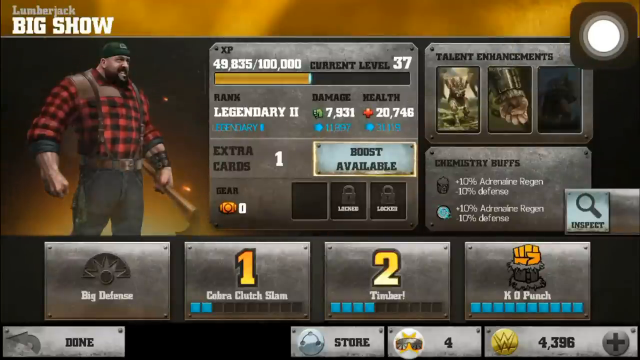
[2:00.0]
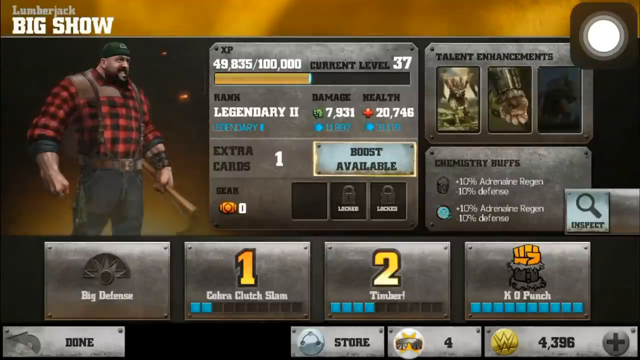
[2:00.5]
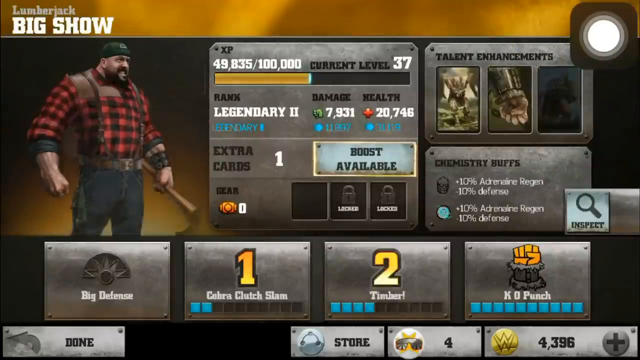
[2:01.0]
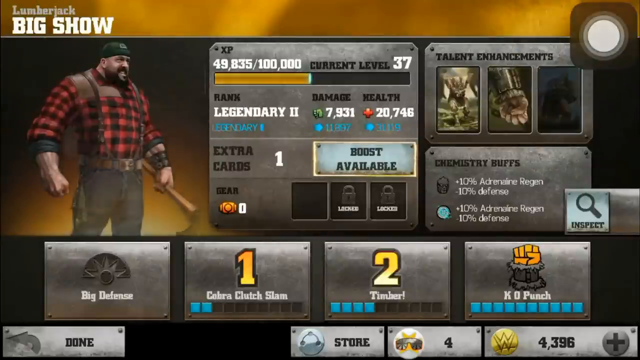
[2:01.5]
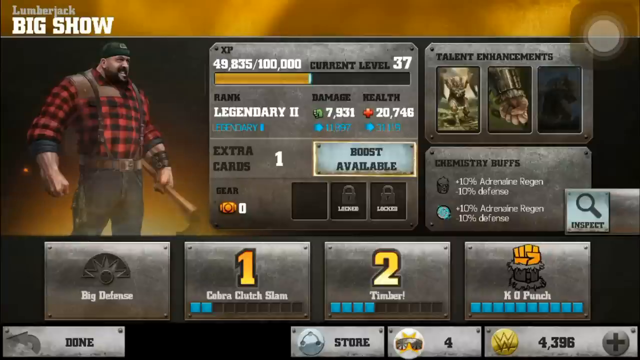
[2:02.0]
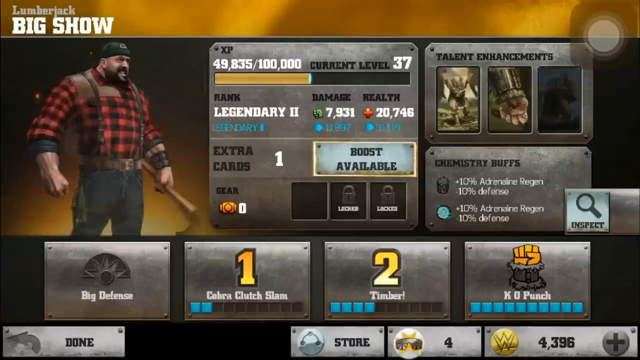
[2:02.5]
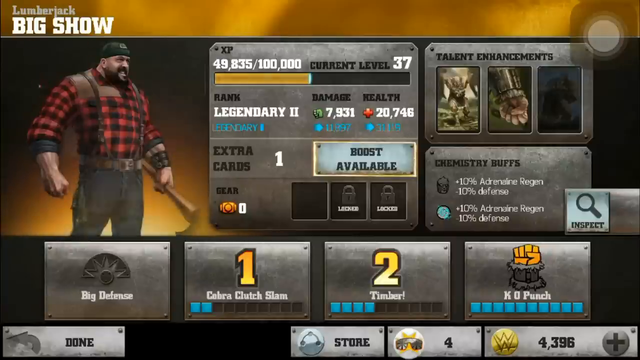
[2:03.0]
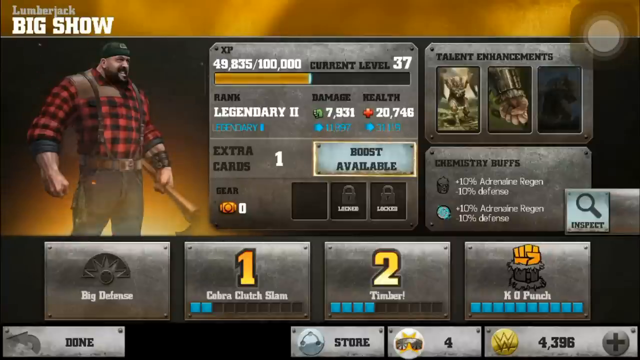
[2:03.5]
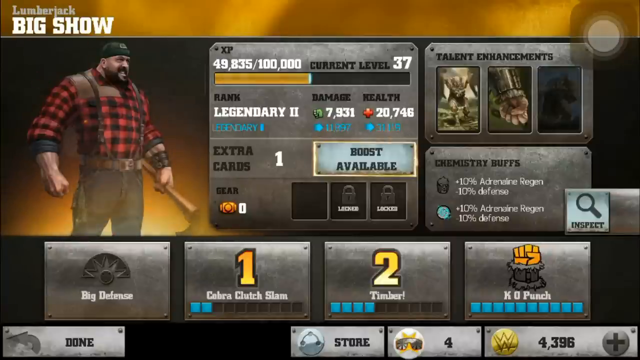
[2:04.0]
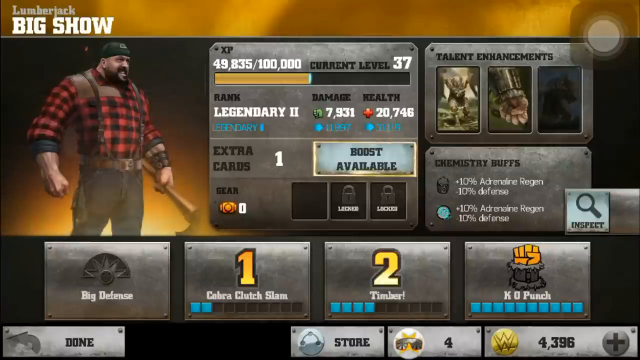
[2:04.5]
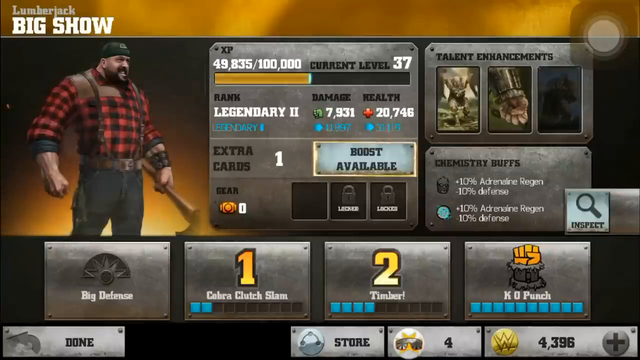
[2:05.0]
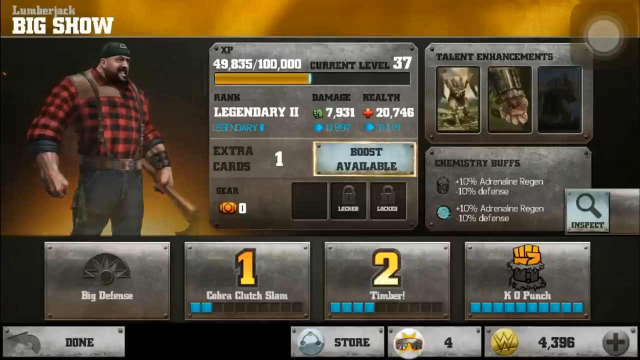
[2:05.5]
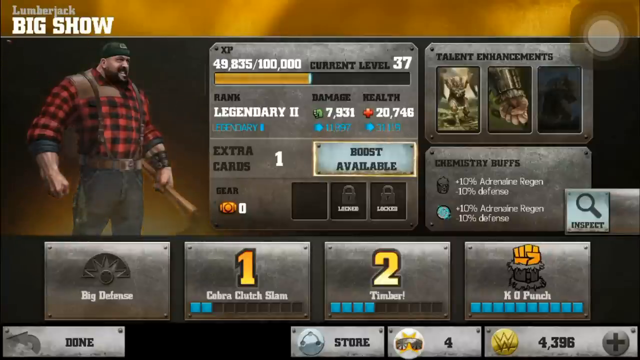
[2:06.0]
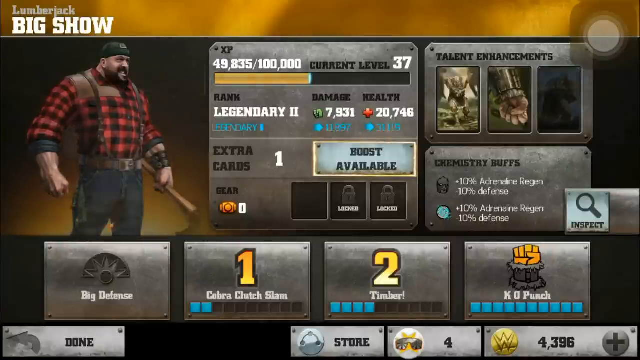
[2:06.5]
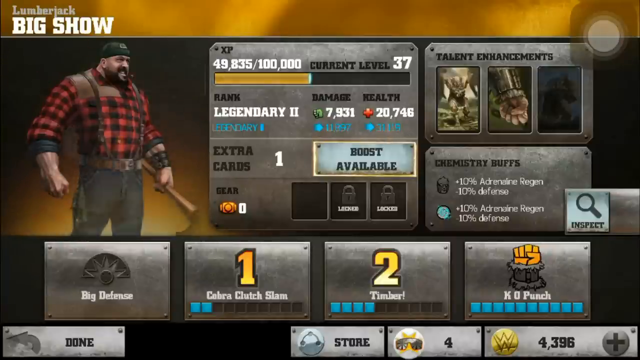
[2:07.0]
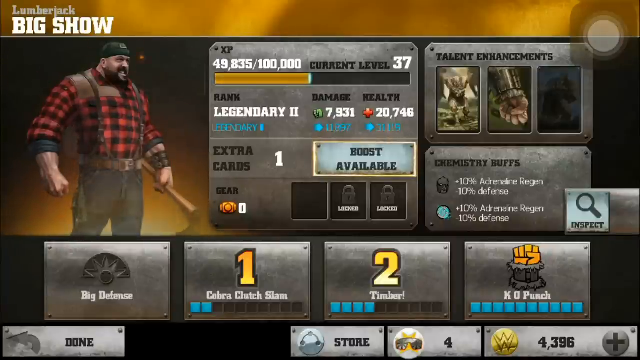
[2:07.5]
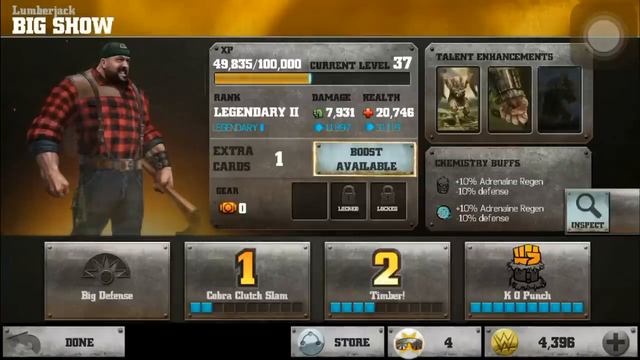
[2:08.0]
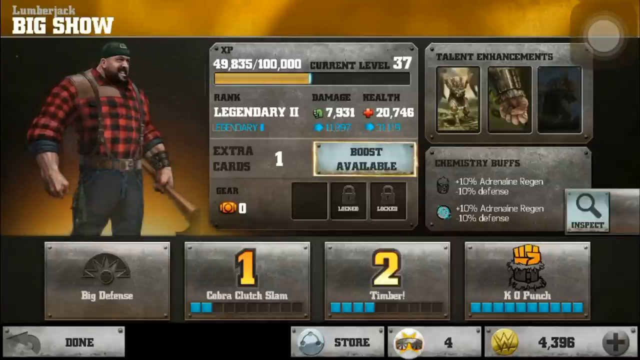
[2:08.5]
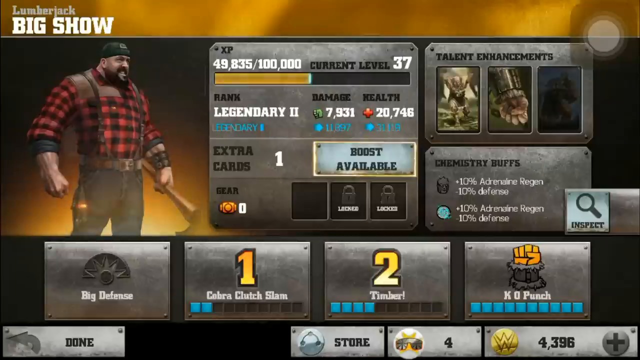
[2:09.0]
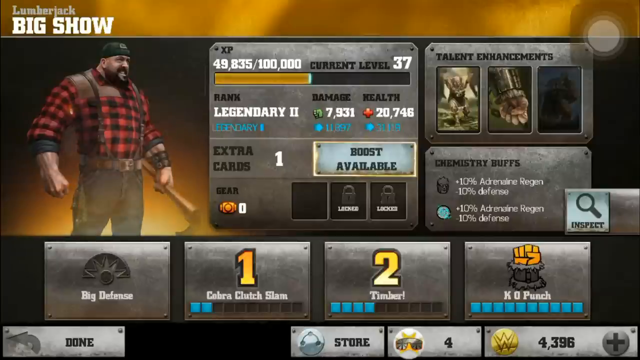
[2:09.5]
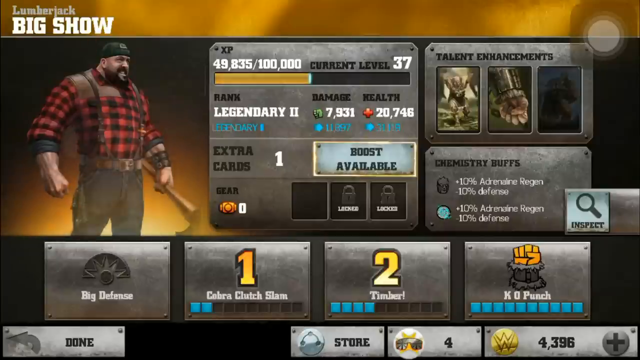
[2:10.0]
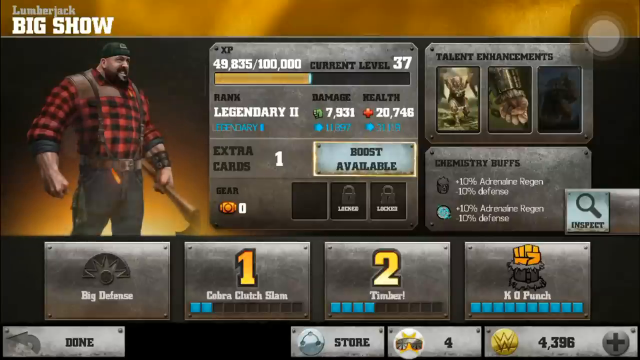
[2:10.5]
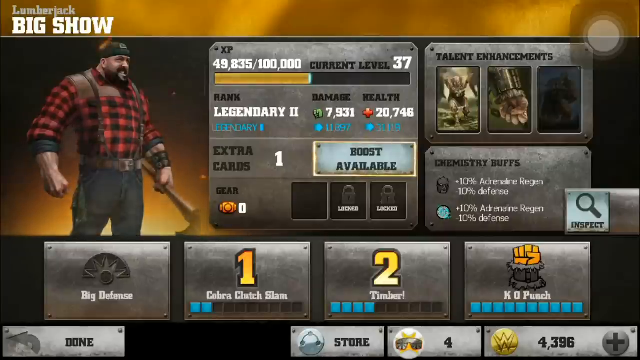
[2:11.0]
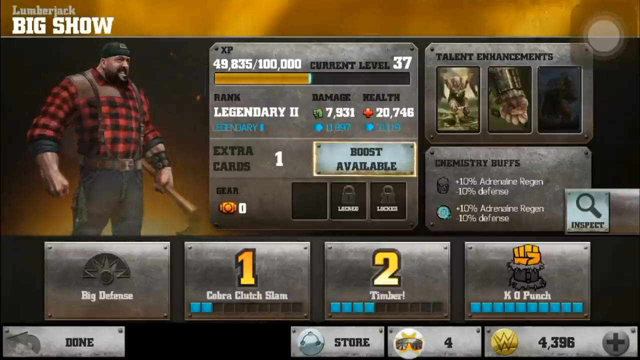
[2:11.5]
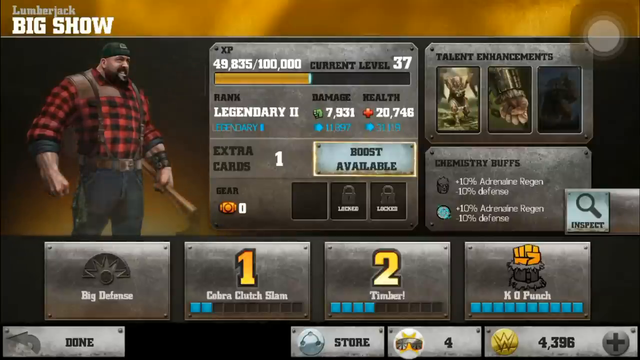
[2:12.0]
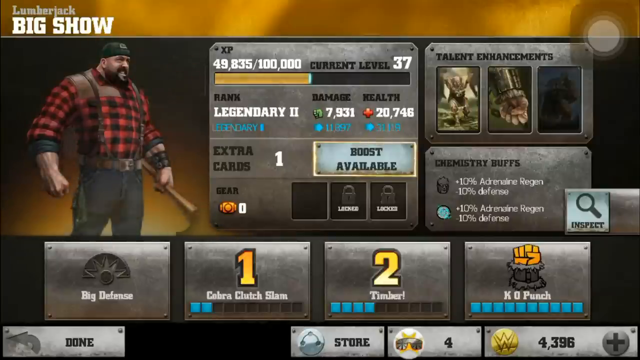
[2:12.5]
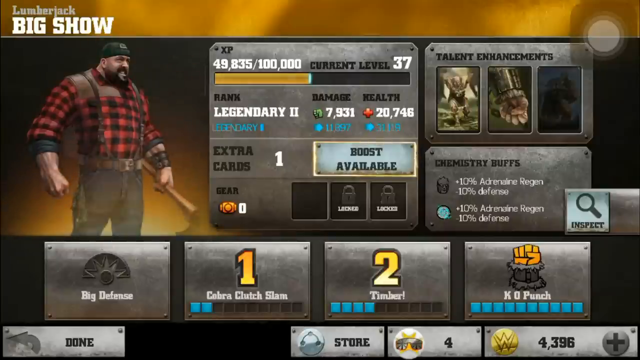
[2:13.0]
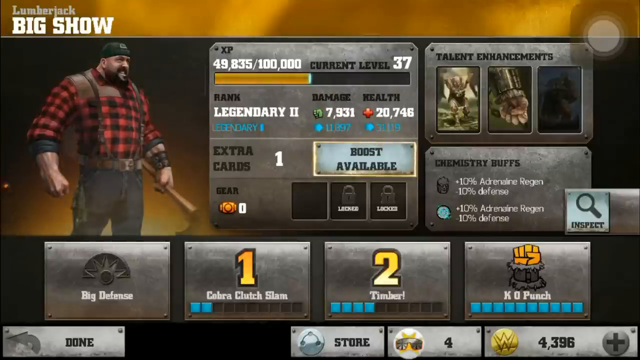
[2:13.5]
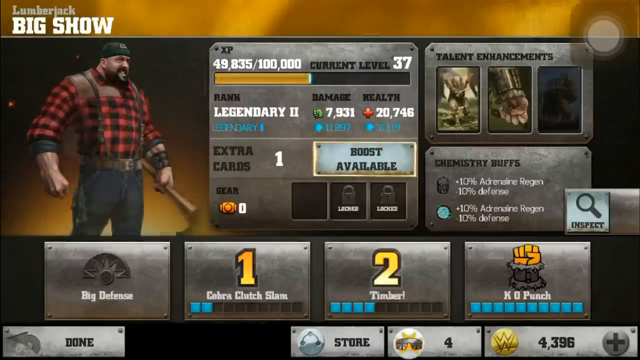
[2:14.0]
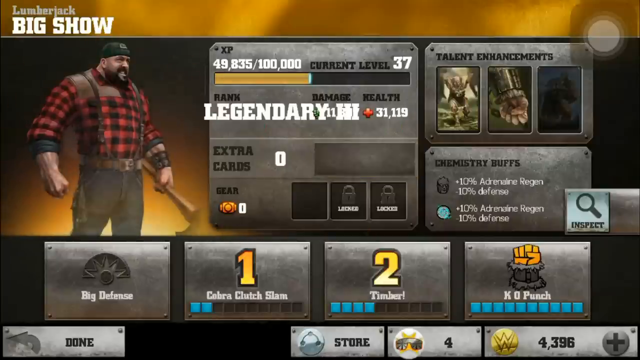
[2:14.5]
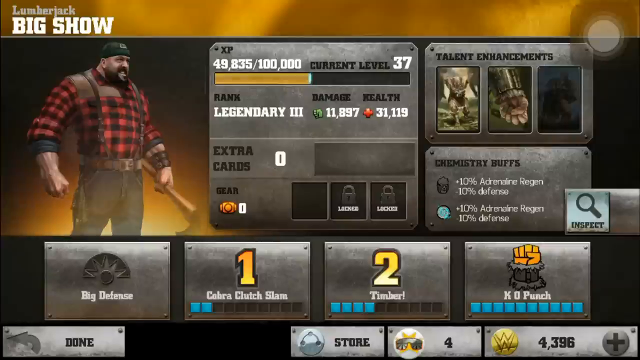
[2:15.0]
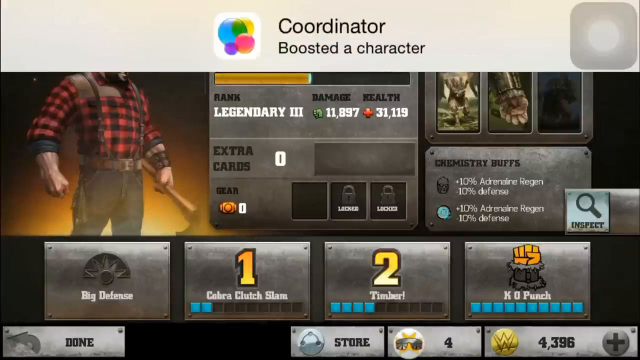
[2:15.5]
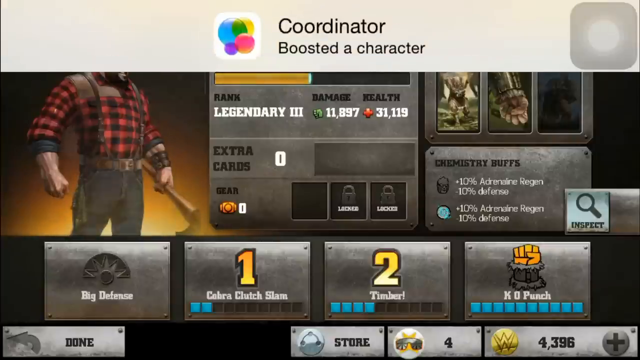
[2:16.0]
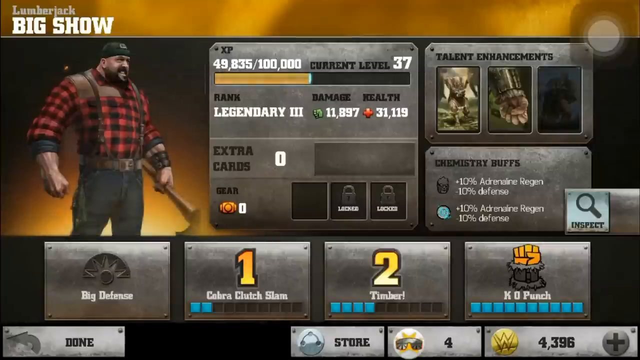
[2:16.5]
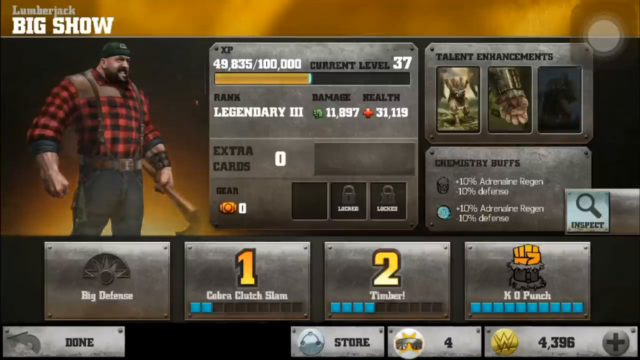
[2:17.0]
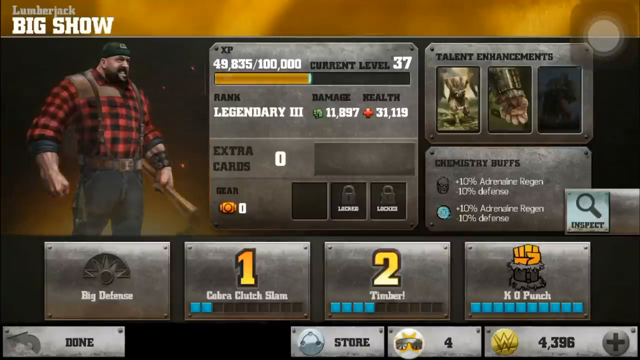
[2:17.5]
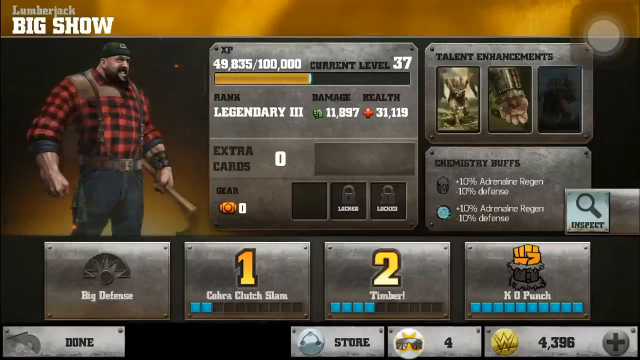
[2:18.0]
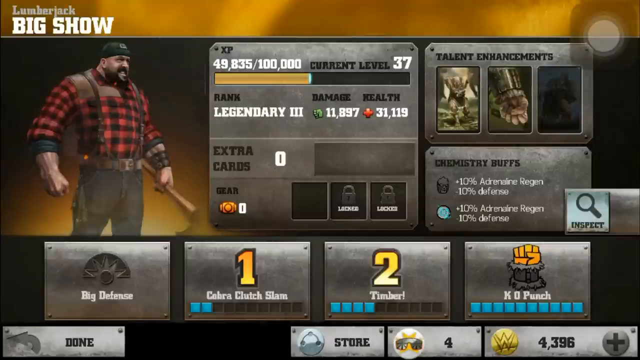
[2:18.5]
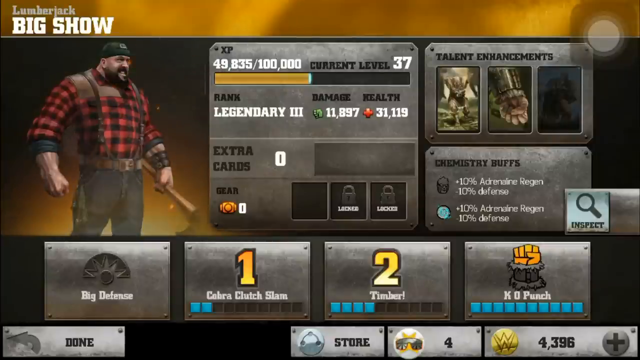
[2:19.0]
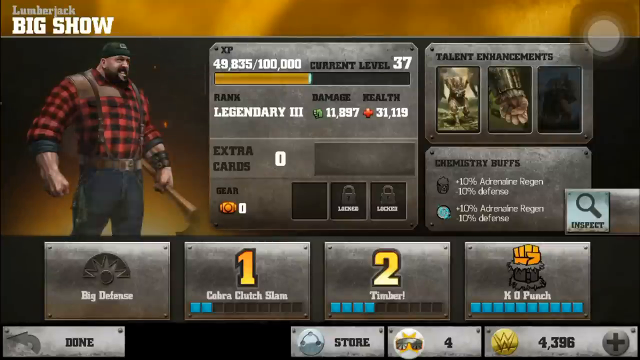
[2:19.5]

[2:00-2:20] The Lumberjack Big Show card stays on screen. Its stats include 10% adrenaline and 10% defense, almost 8,000 damage and almost 21,000 health. Text also mentions boosting a character.